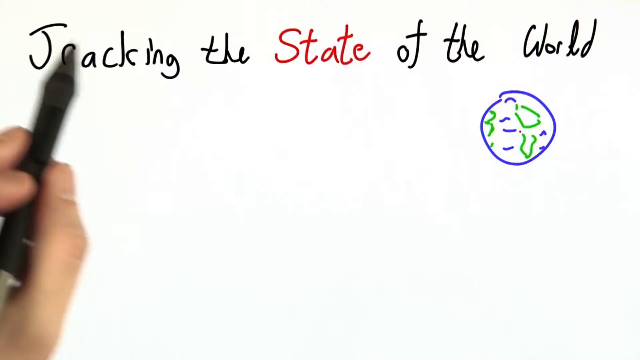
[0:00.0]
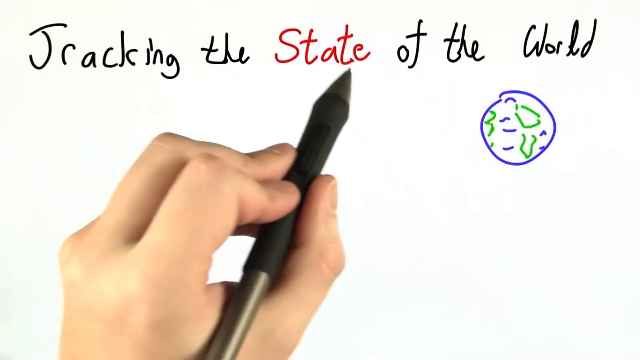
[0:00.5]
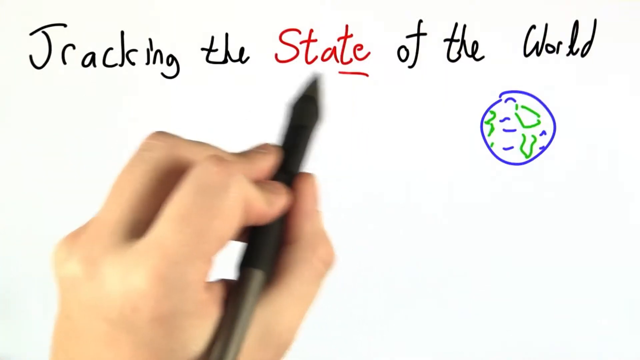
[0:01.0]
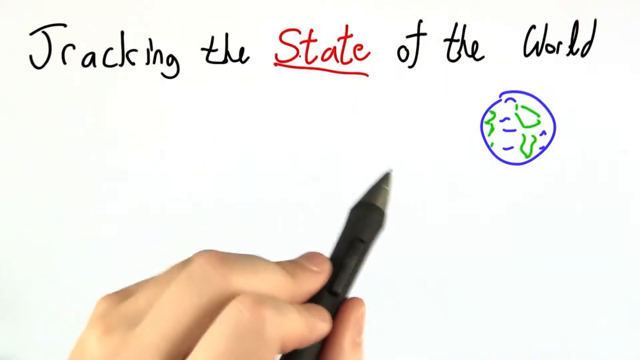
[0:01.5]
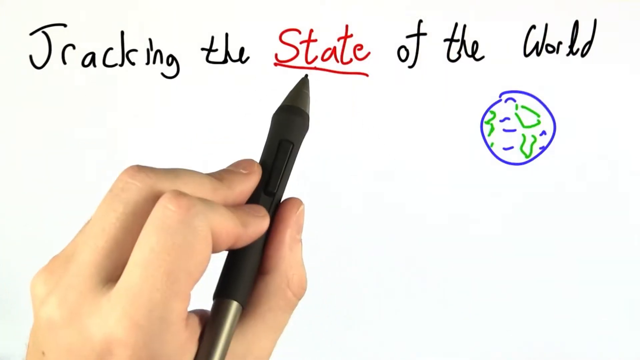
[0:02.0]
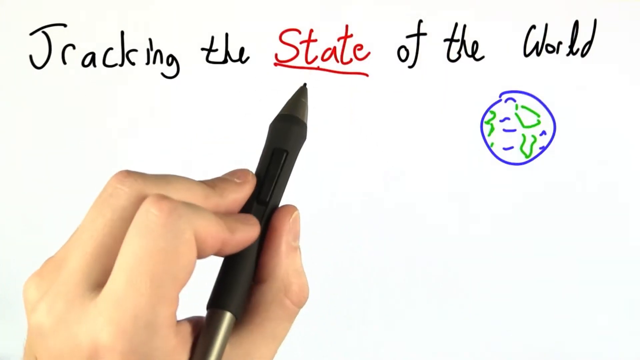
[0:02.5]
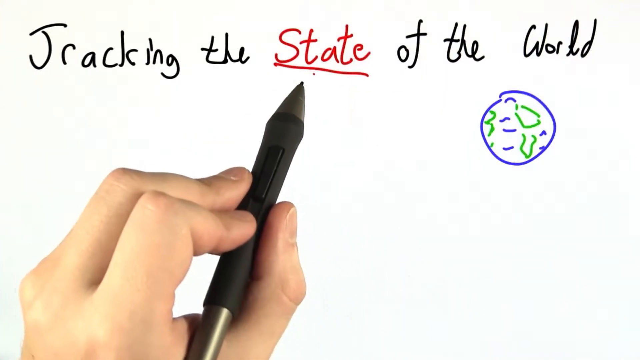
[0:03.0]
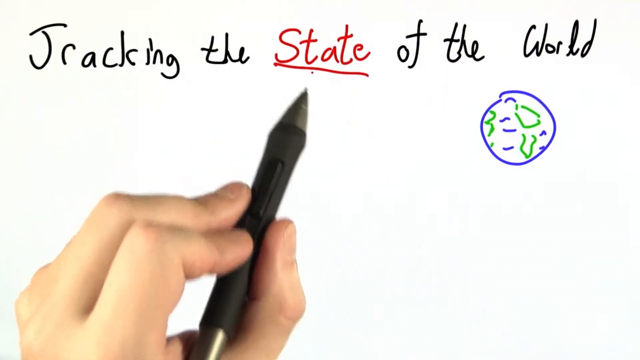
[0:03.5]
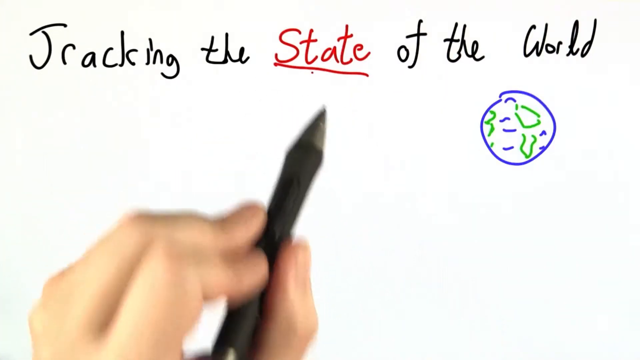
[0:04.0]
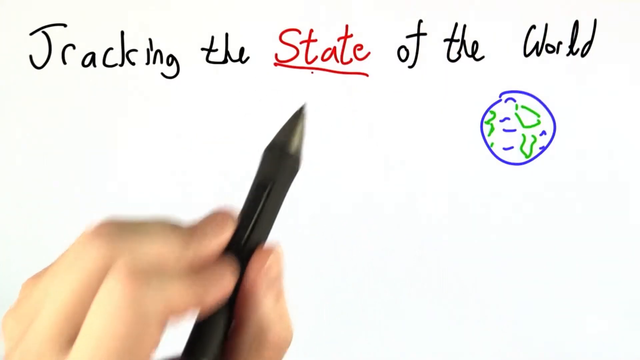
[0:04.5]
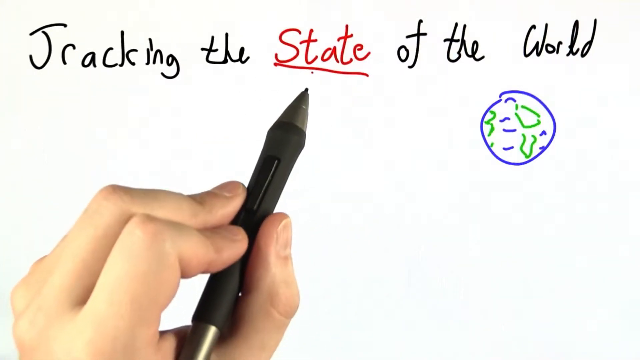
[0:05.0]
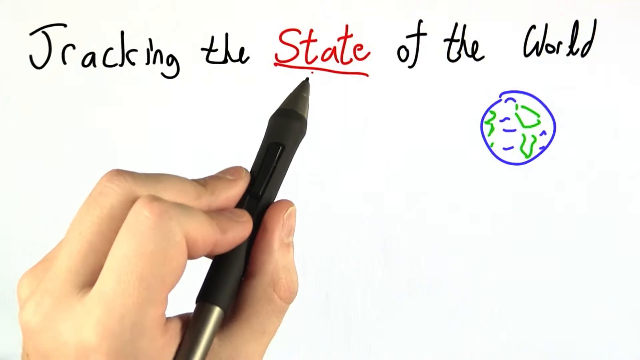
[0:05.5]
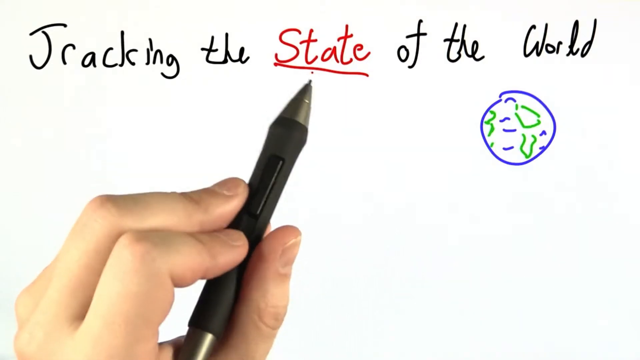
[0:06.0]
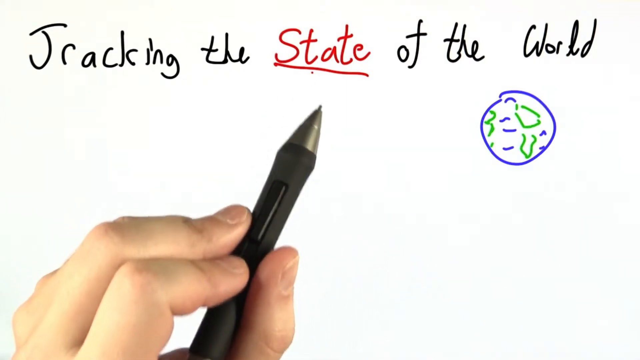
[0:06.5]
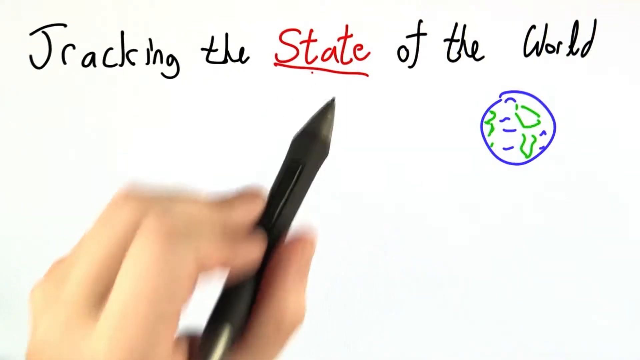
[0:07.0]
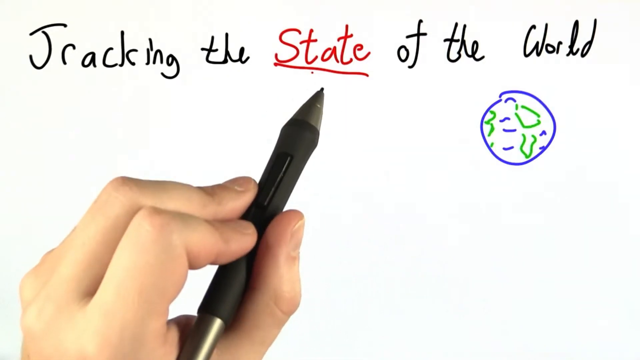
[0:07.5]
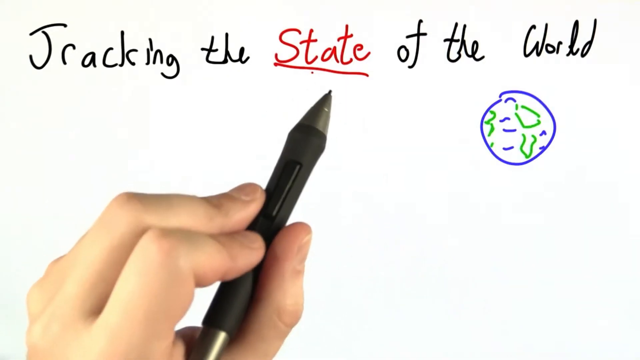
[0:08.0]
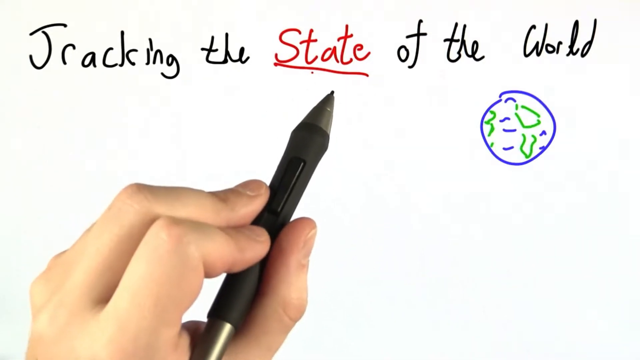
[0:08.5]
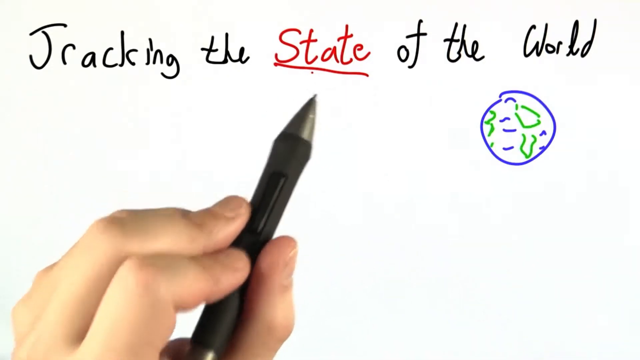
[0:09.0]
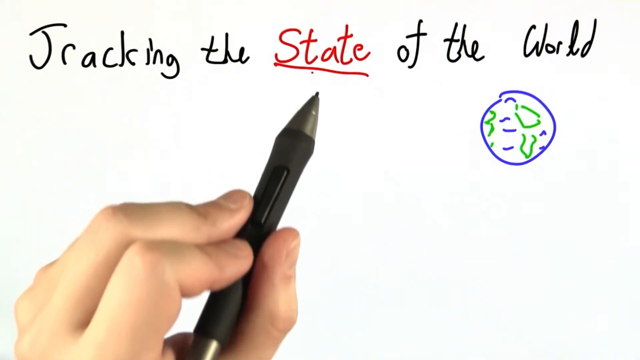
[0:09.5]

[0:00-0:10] The video opens on a screen recording of what seems to be the touchscreen of a laptop, a convertible laptop, or a tablet, used with a pen designed for tablets and touchscreens. The screen is blank apart from handwritten text near the top that reads "tracking the state of the world". The word "state" is in red ink, while the rest of the text is in black. Below the text, near the top right corner, is a small drawing of what seems to be the earth. The person writing is left-handed. They draw a red line beneath the word "state" and use the pen to point to it.